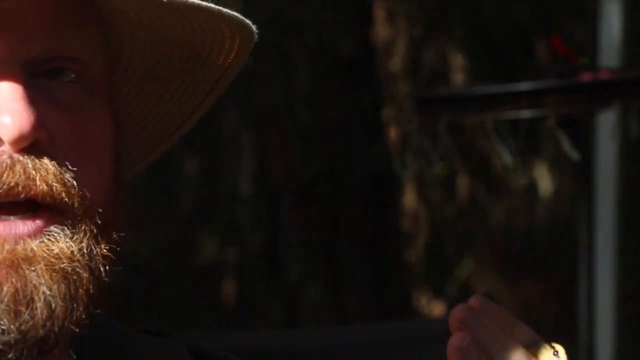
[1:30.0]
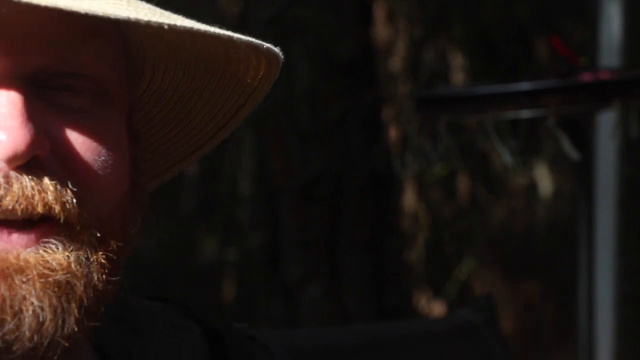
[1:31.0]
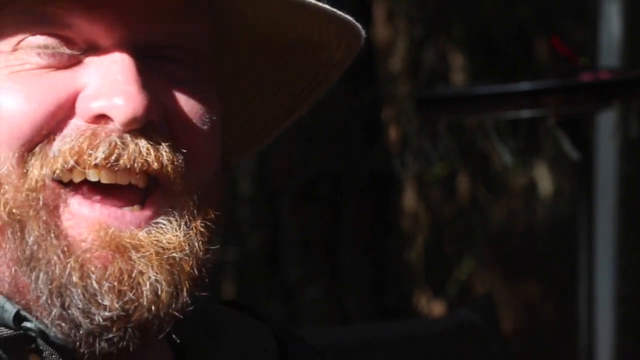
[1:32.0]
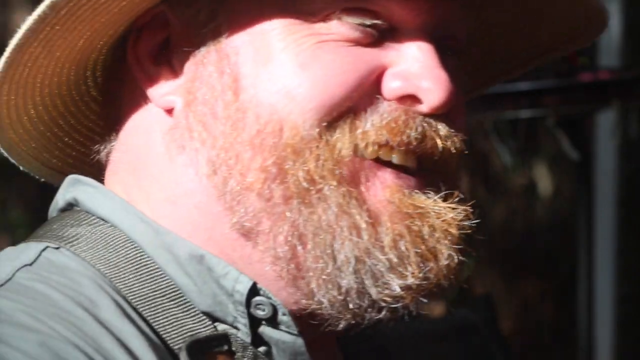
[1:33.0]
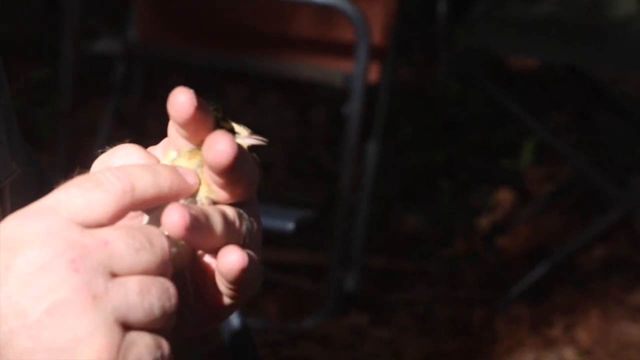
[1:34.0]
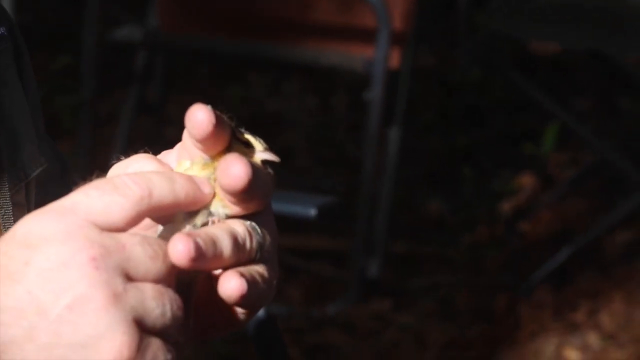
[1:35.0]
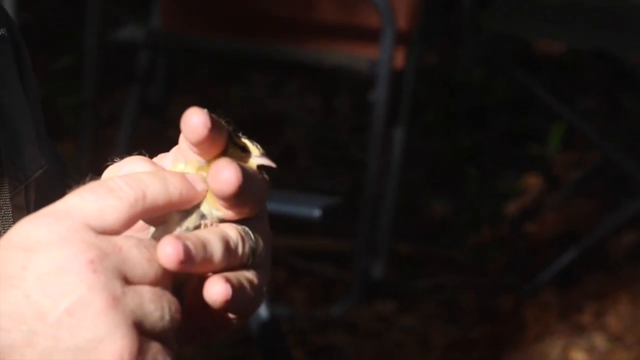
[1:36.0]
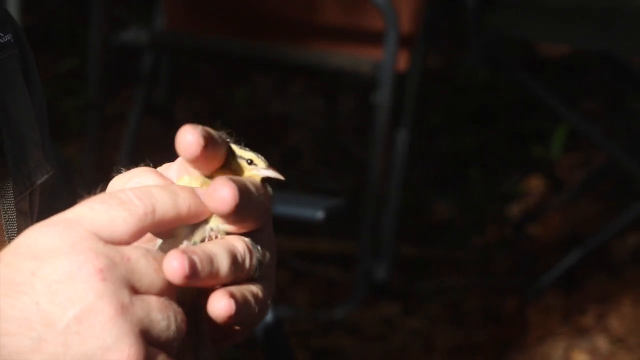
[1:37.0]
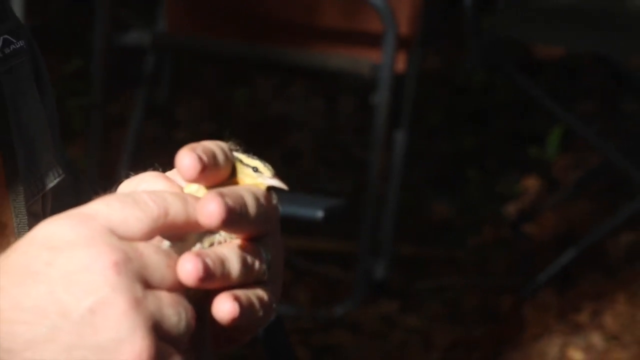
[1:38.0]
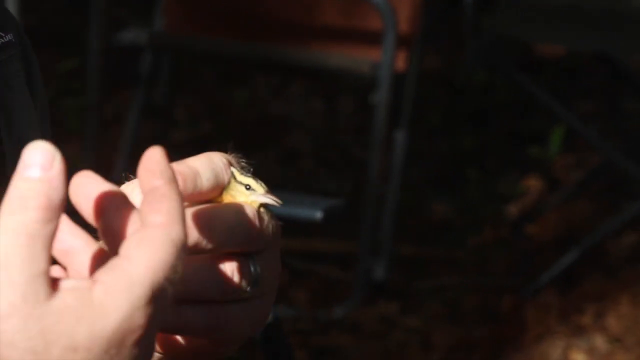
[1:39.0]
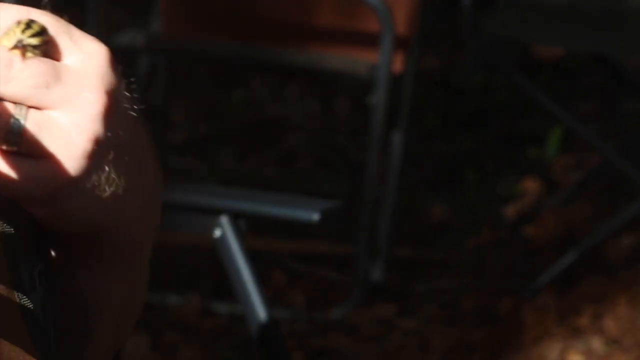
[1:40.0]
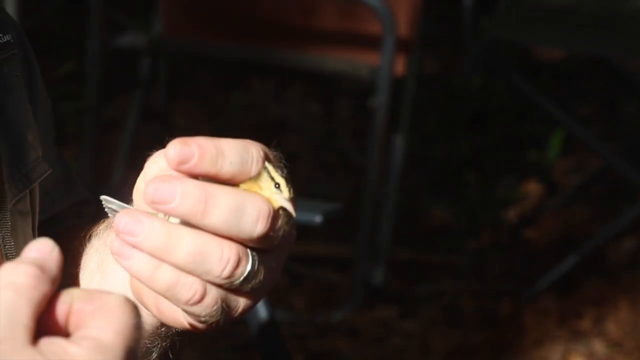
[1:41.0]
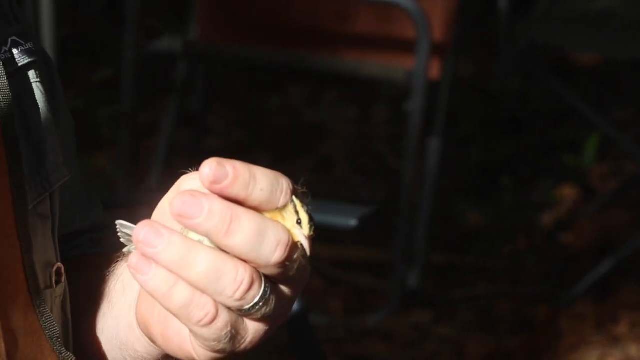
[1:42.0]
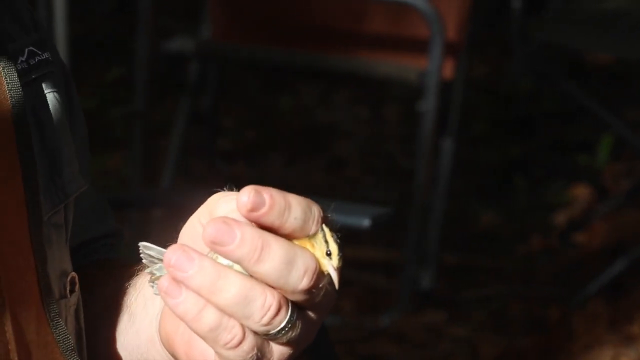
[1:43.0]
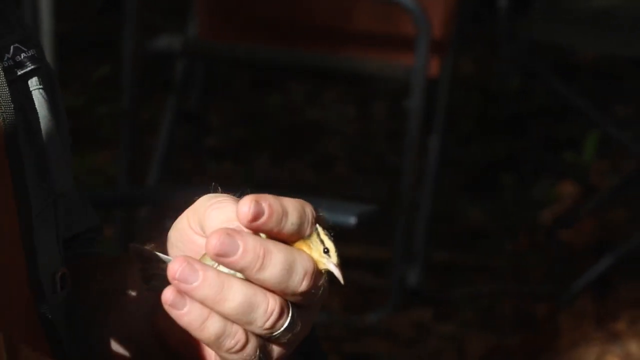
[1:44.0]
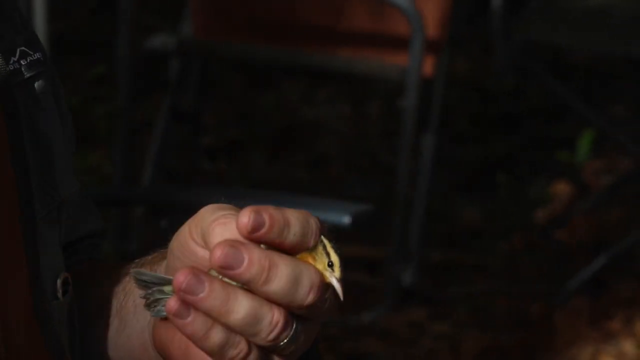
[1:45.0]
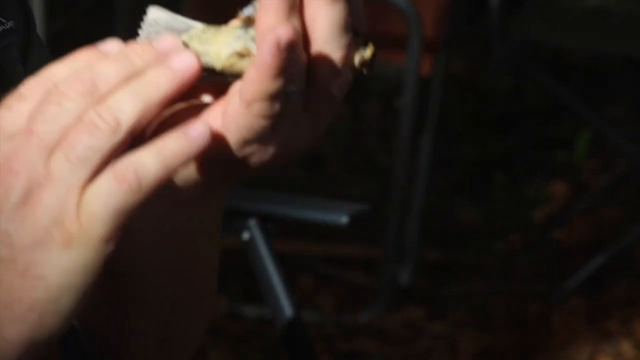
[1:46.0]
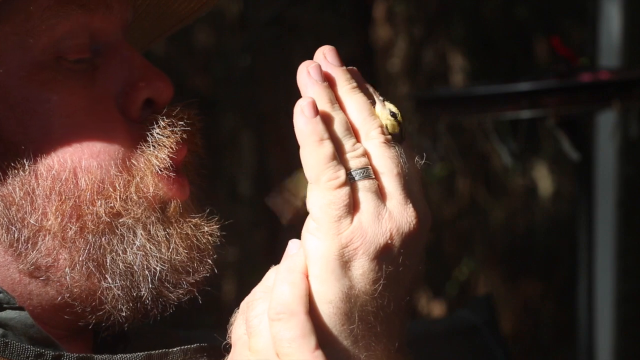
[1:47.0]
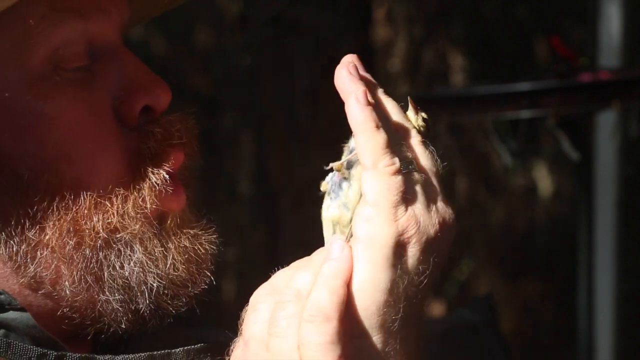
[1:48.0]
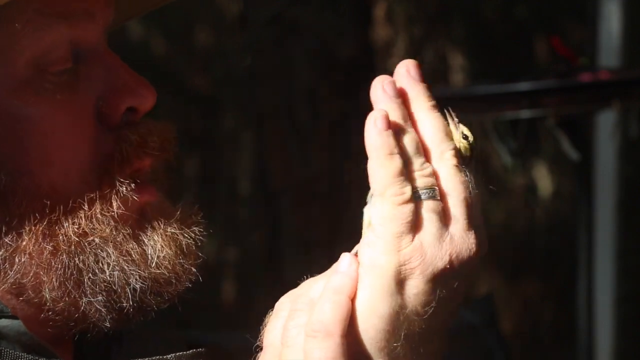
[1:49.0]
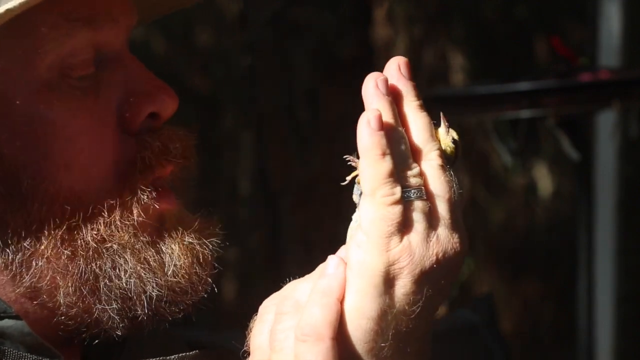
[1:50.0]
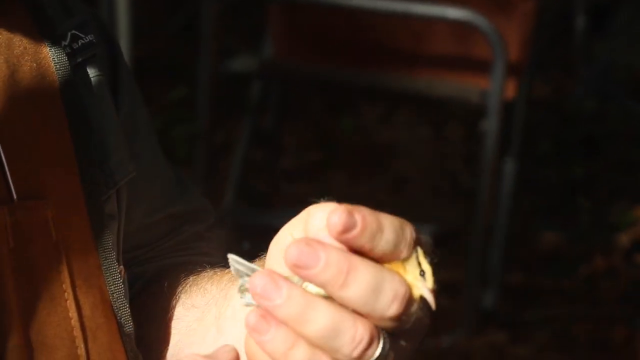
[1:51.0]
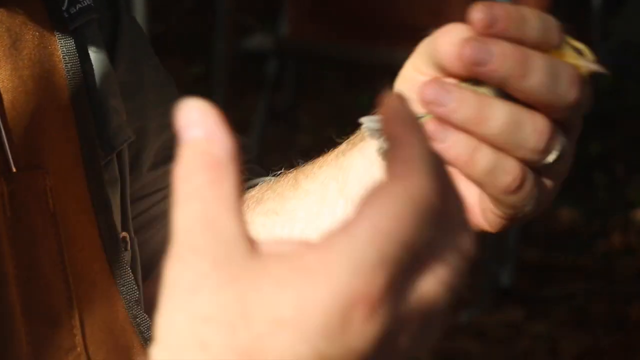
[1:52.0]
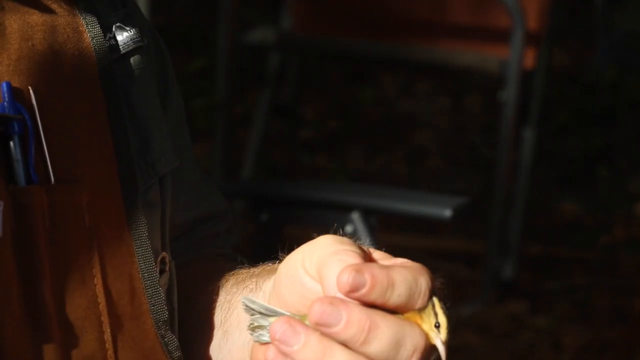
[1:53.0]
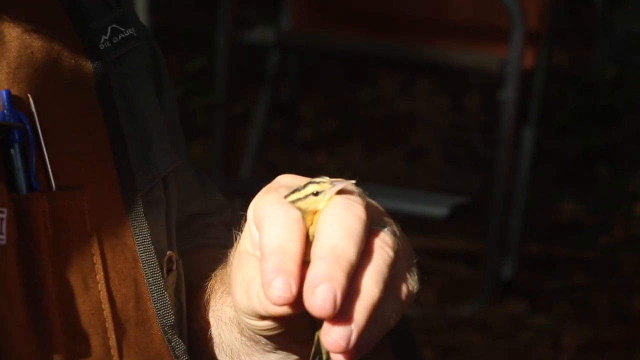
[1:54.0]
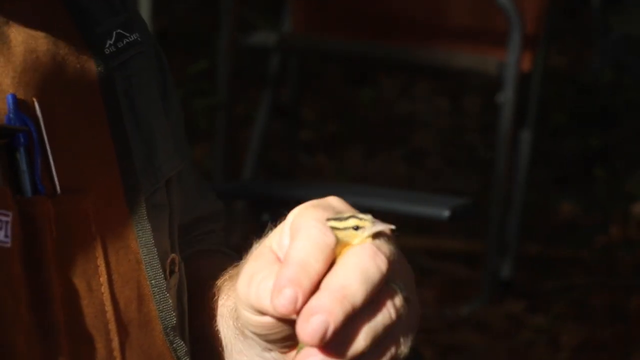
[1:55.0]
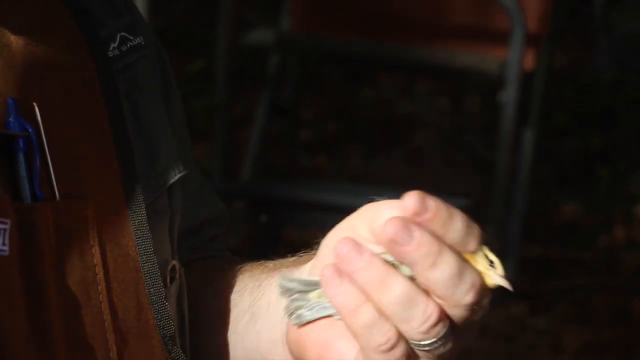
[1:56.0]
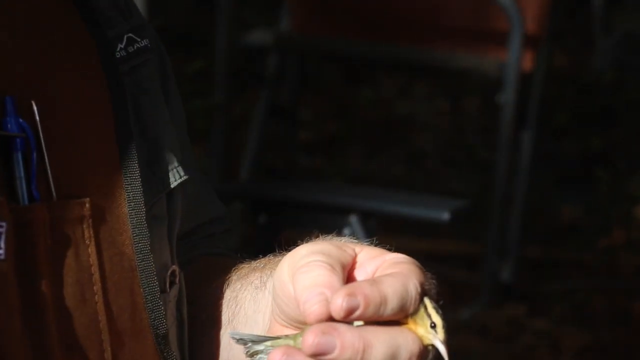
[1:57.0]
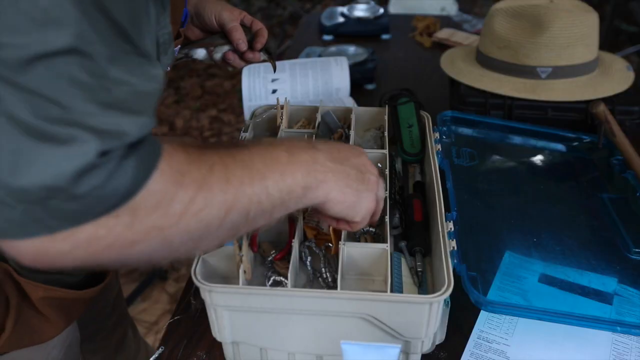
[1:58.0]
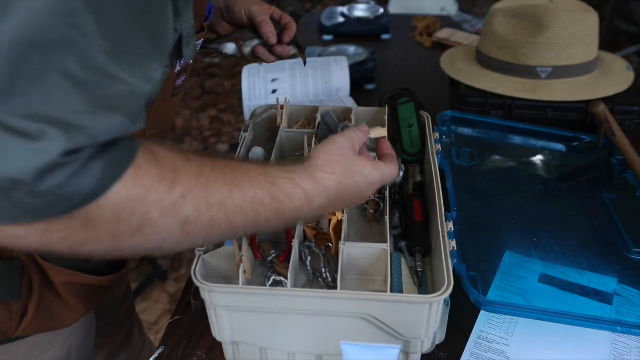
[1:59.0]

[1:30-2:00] A doctor laughs as she holds a baby and massages a certain part of it, then continues to blow into it. Someone takes something out of a toolbox and goes with it, while others work separately on others. There seem to be all age groups, from the smallest babies to grown ones. Finally a heavyset doctor reaches for something in the toolbox.